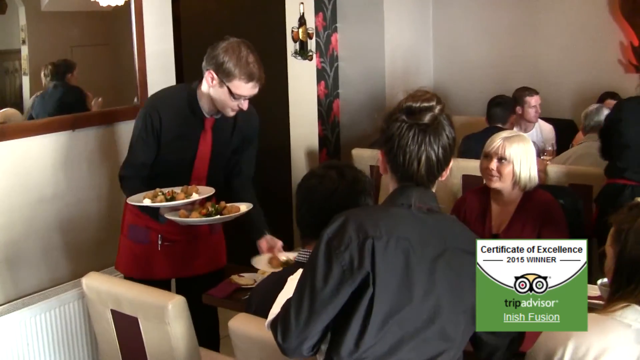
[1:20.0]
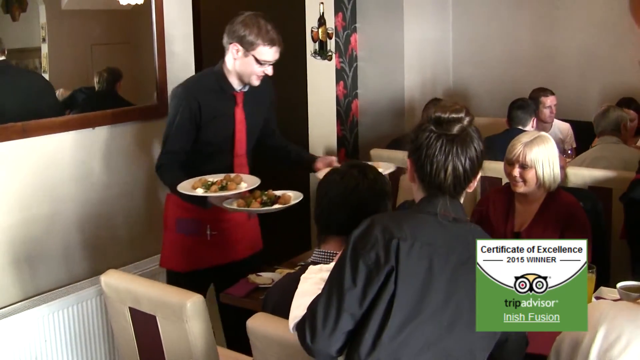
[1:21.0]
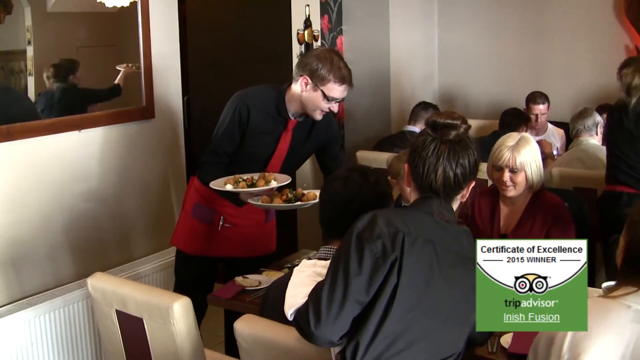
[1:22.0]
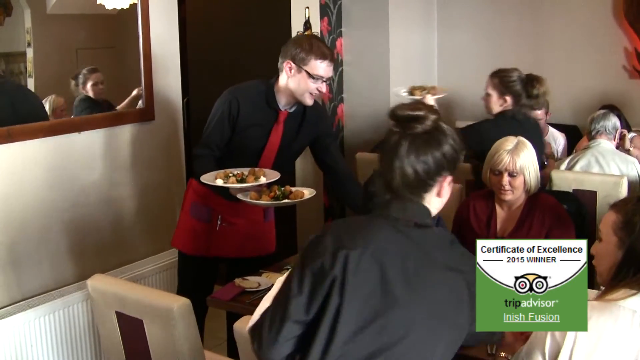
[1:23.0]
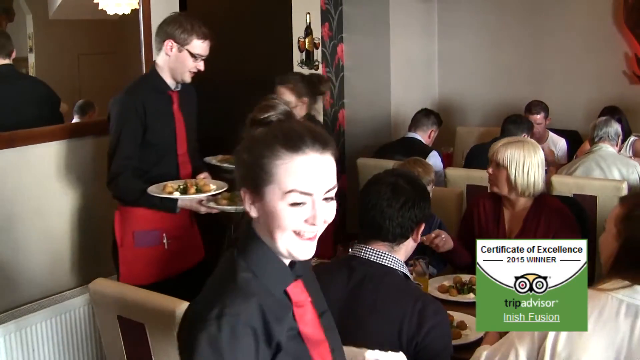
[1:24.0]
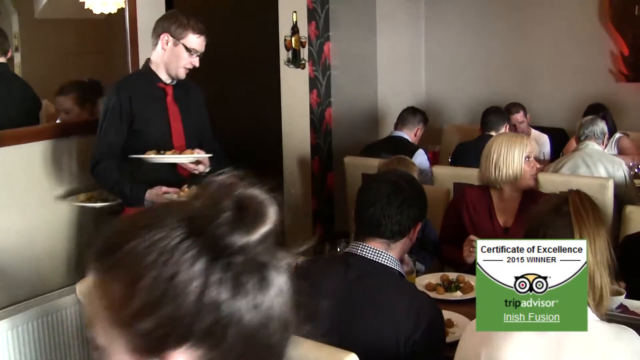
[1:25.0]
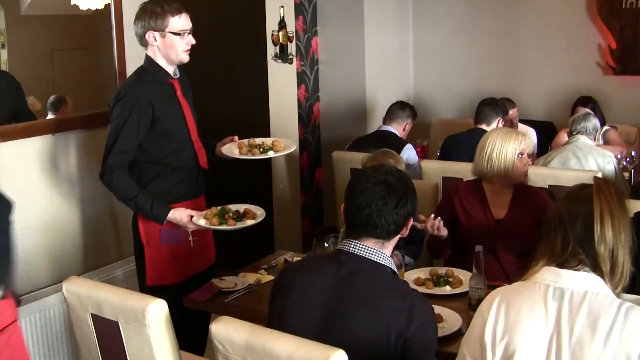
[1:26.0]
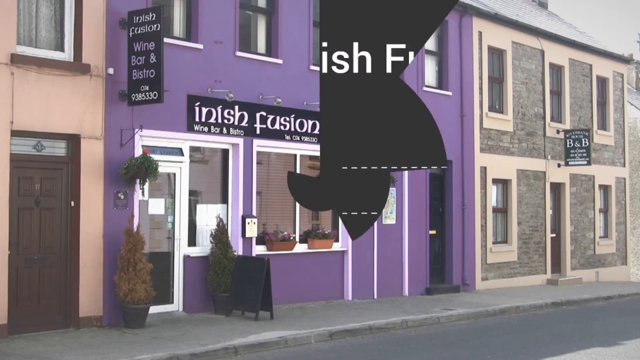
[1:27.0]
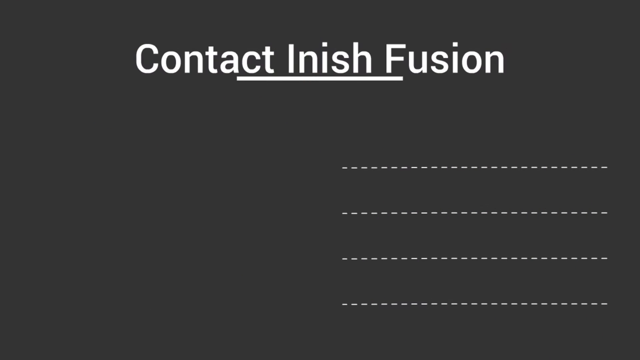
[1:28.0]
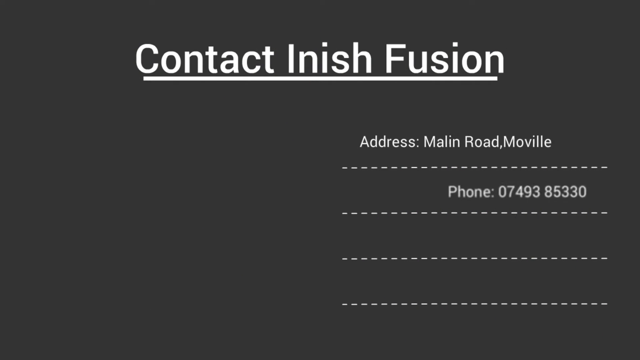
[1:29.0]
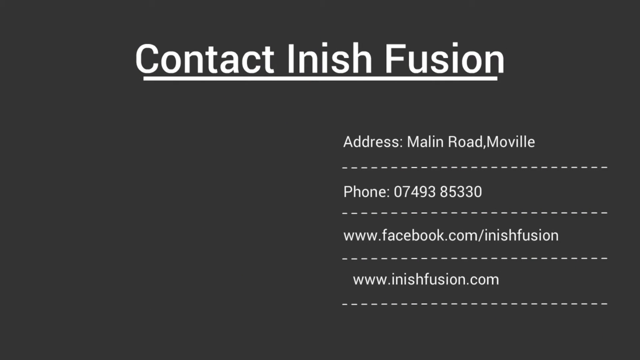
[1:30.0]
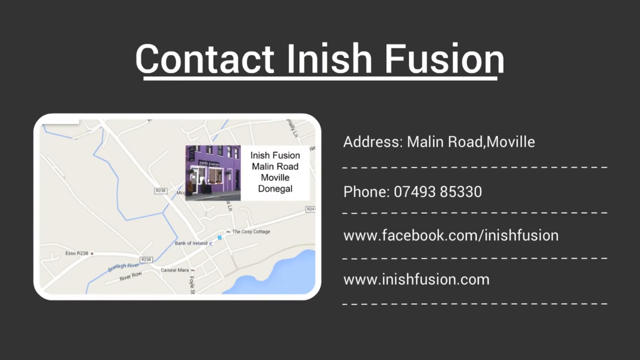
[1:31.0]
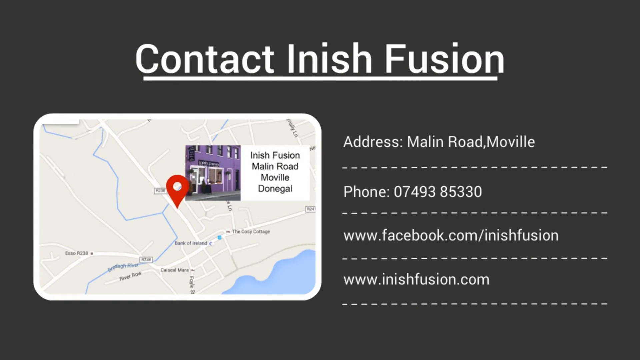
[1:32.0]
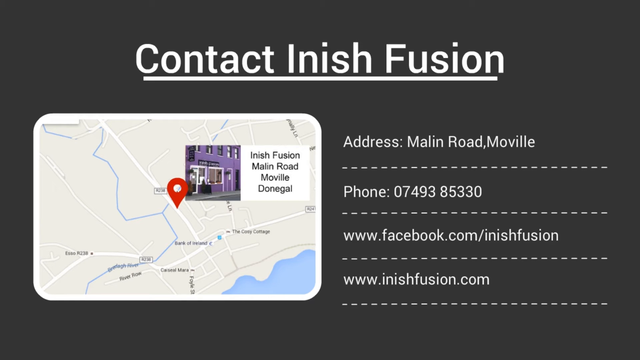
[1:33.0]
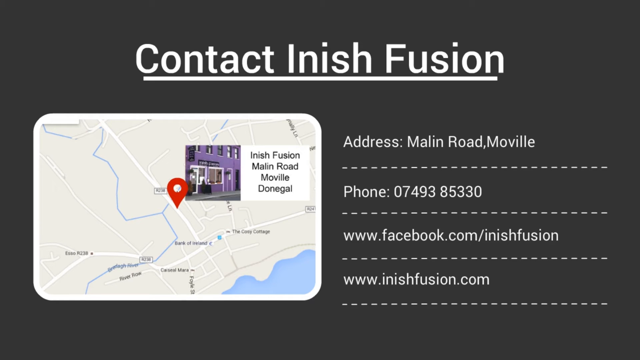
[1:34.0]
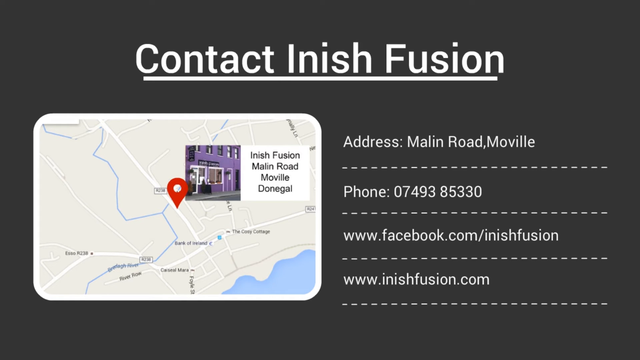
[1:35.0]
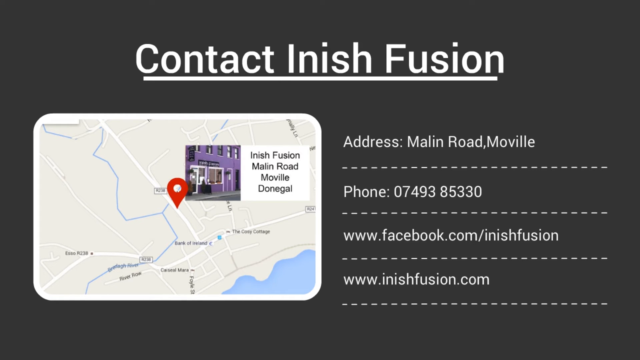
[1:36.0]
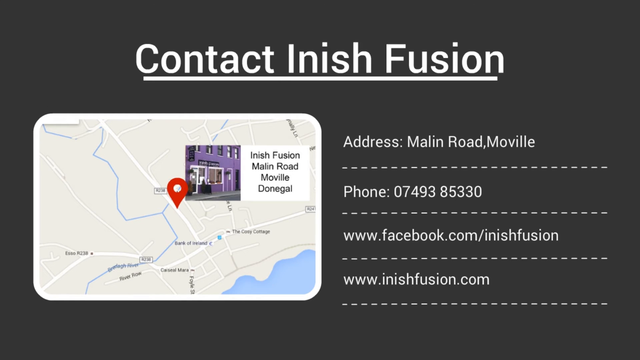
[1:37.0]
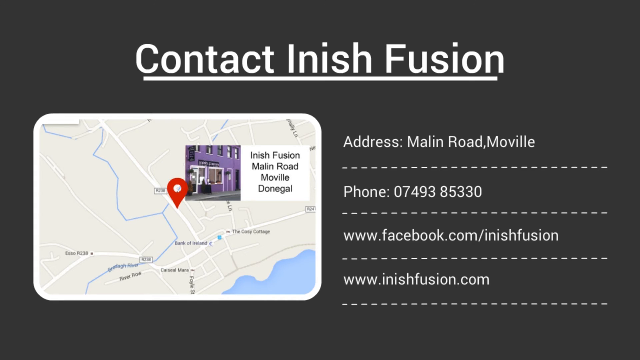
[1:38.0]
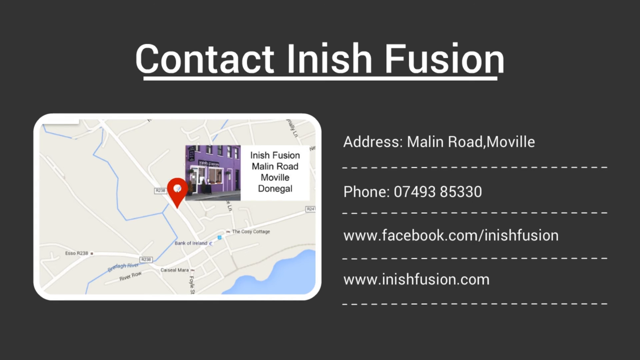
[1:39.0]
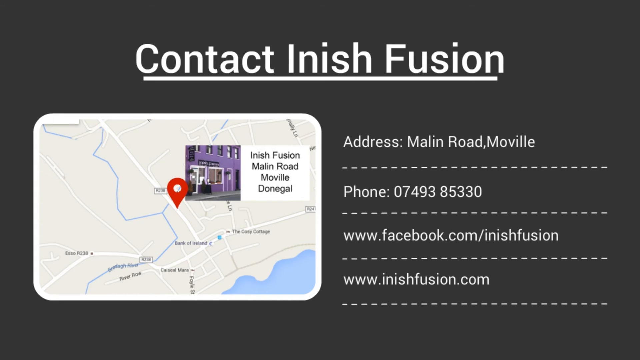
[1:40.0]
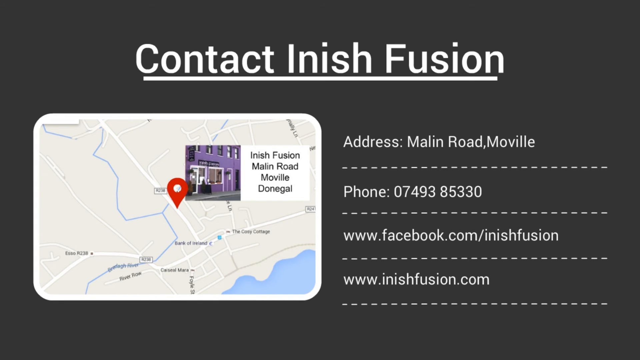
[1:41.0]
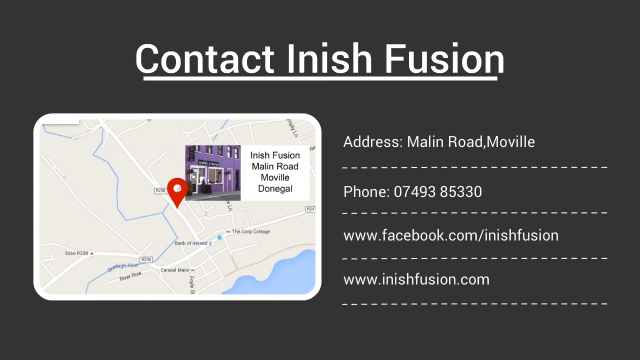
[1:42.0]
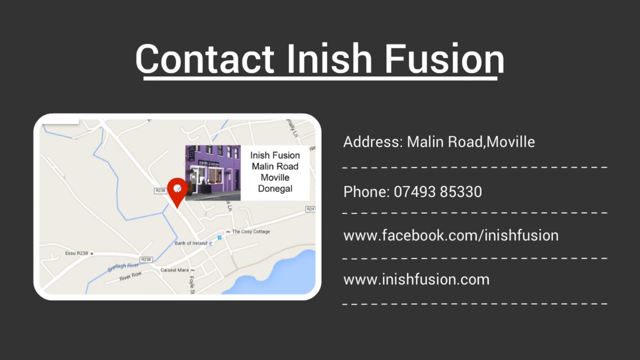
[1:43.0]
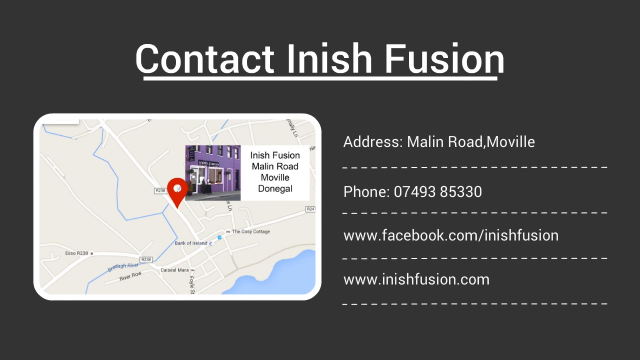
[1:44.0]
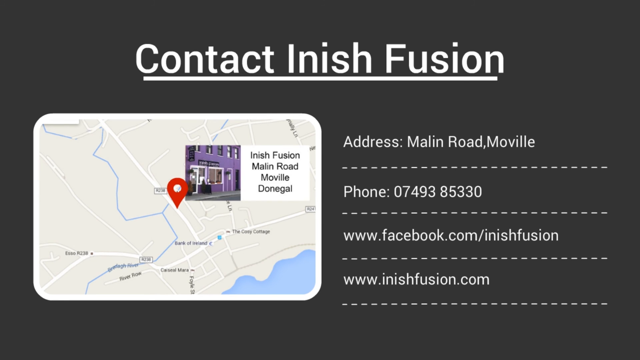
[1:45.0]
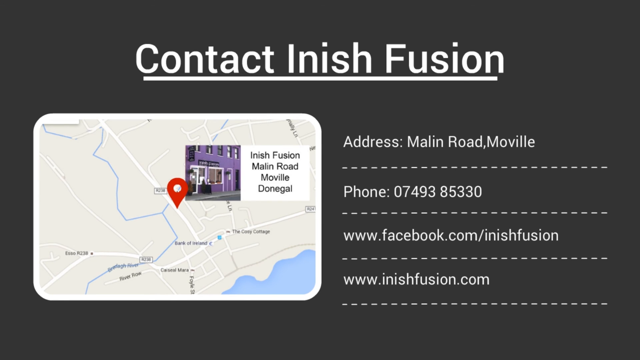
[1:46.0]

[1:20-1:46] A waiter serves a table, carrying three plates, while other waiters bustle around. In the bottom right there is a TripAdvisor logo with "Certificate of Excellence 2015 winner." Every visible seat is filled, and people bustle about serving food; the restaurant seems popular. The video then goes back to the street with the purple building, followed by a closing screen: a black screen with underlined white text that says "contact Anish Fusion." On the right side are an address, "main road, Movil," a phone number, and a link to their Facebook account. On the left side a map pops up showing where the restaurant is.